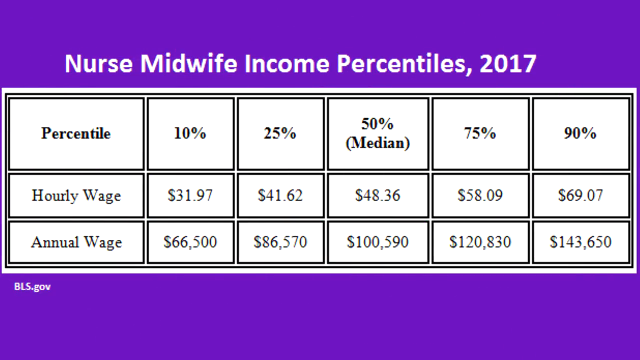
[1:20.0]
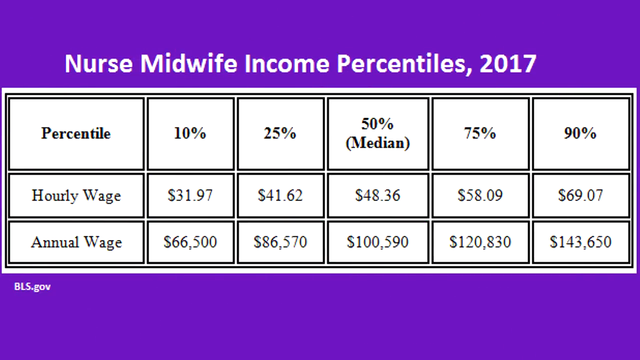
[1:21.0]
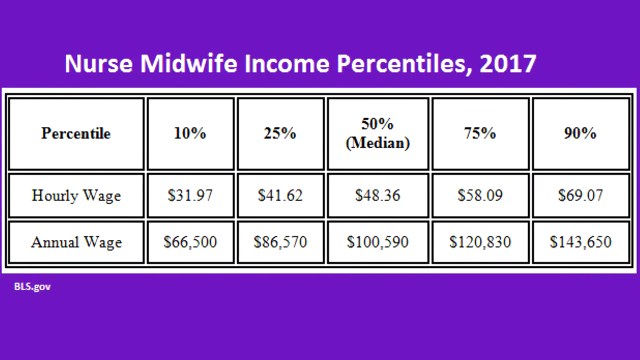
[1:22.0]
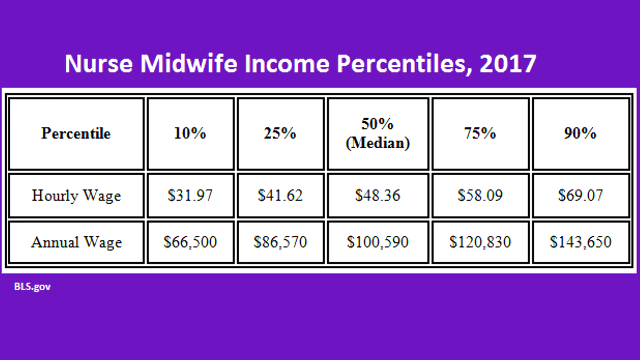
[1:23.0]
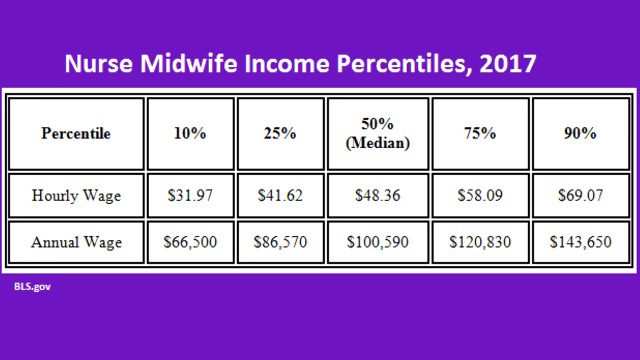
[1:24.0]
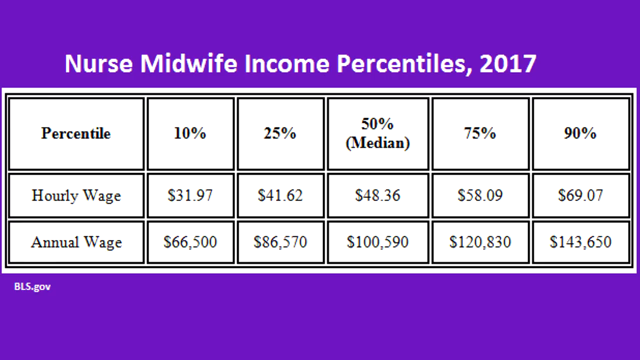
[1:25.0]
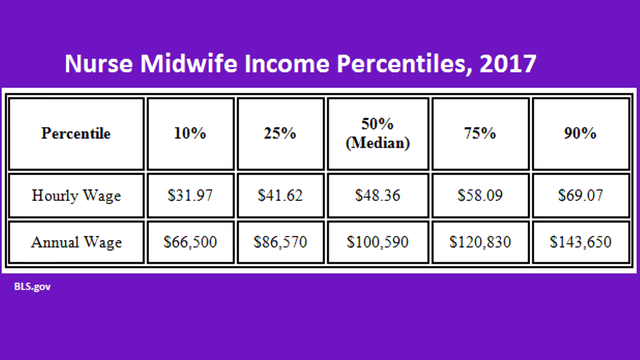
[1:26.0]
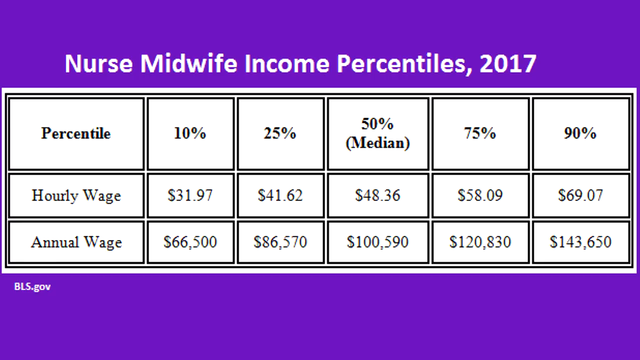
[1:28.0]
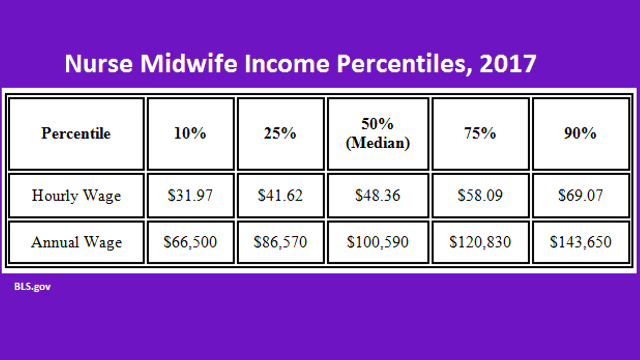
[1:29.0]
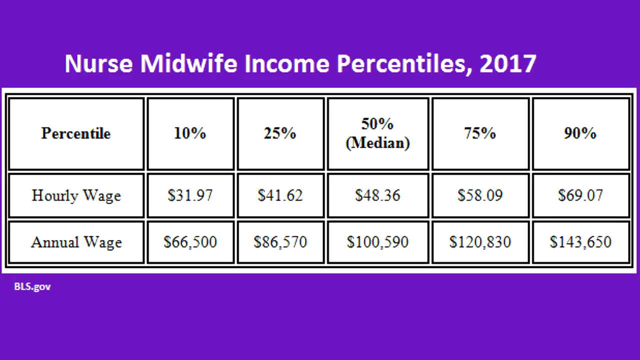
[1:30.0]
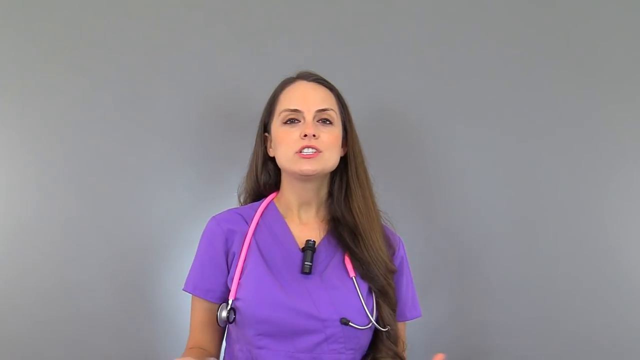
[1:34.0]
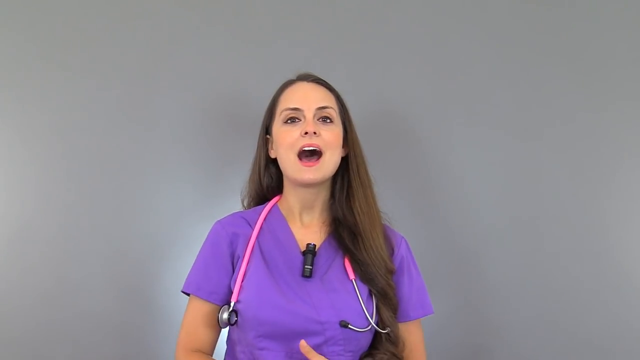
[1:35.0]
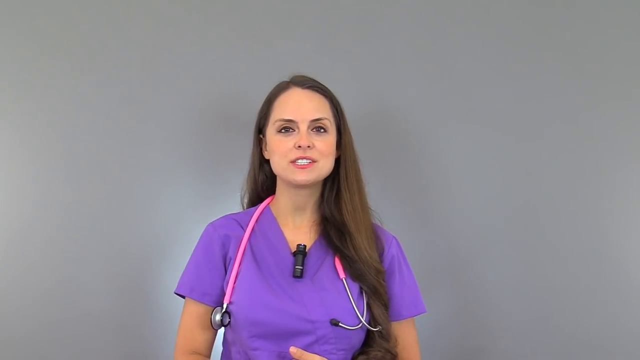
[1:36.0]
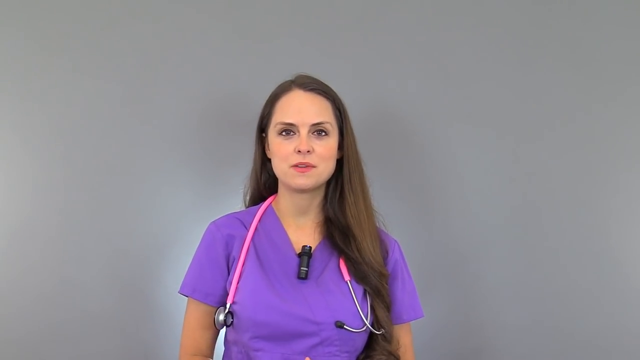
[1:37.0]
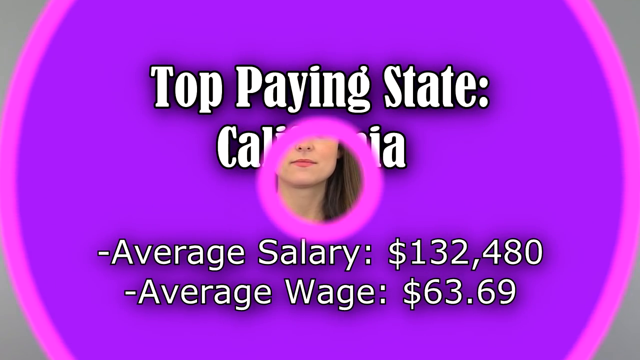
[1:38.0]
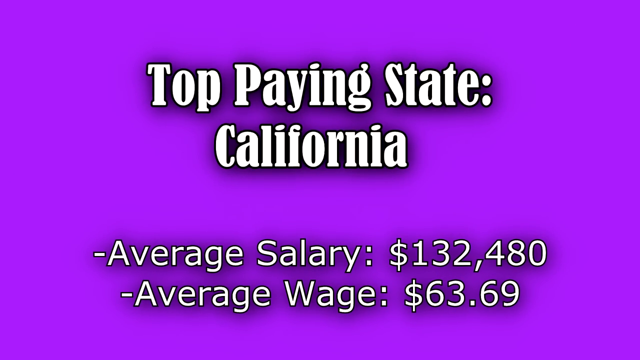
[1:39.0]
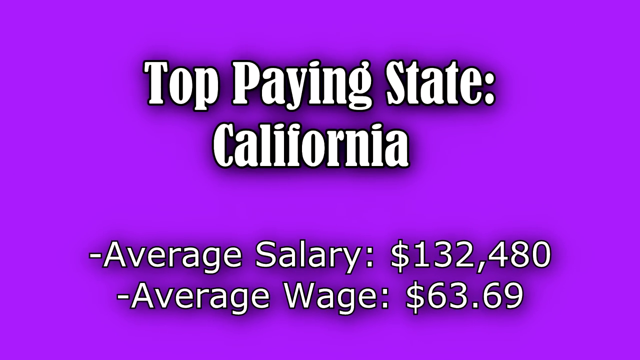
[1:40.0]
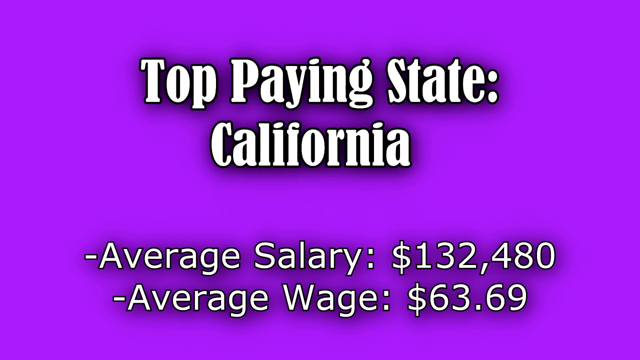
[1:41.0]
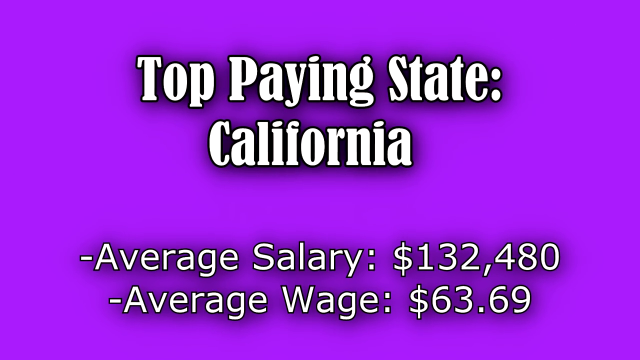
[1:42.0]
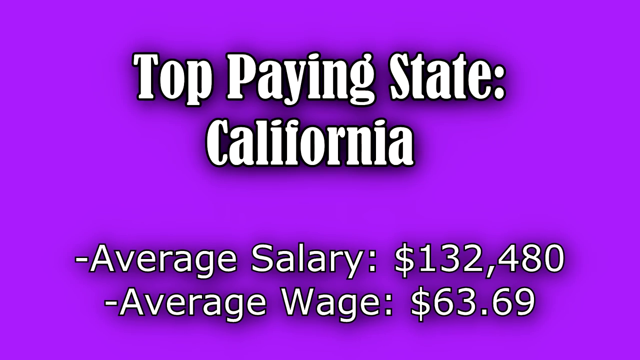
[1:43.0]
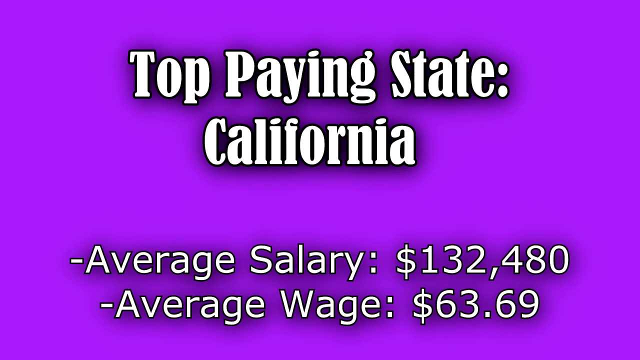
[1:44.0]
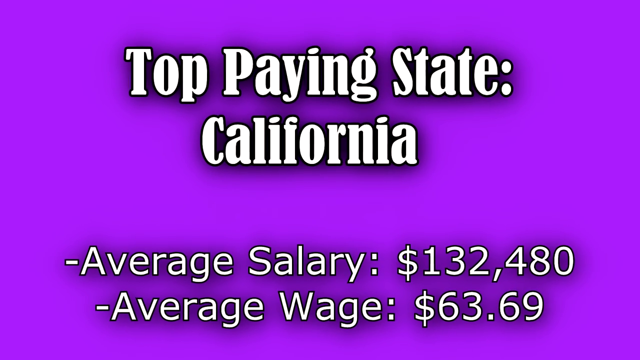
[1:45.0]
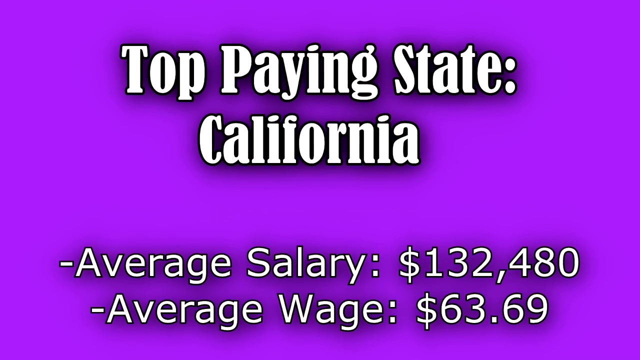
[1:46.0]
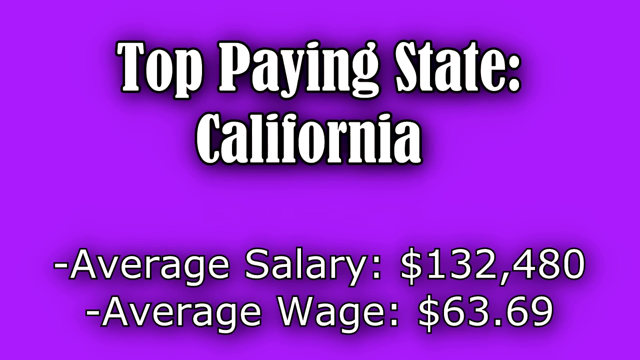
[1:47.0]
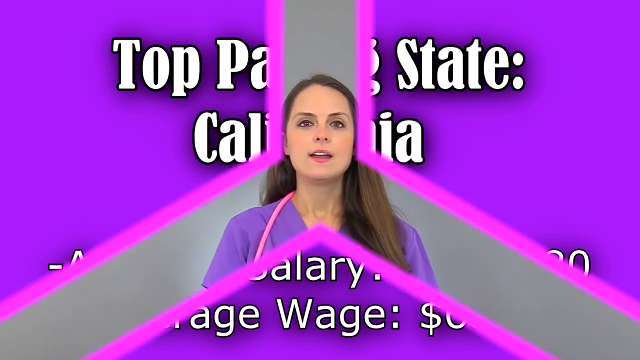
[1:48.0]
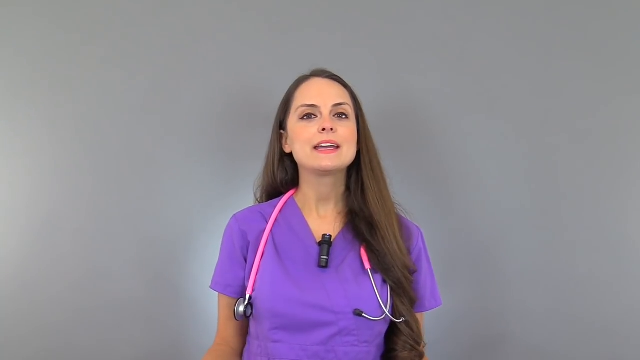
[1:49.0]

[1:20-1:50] The purple screen titled "Nurse Midwife Income Percentiles 2017" remains for approximately 13 seconds before changing to a full screen of the nurse in a purple scrub top with a pink stethoscope around her neck, in front of a solid gray background. She has long brown hair and a microphone clipped to the center of her scrub top's neckline. She keeps talking, occasionally shimmying her shoulders back and forth as she speaks. Next comes a purple page with a white title at the top, each word capitalized and outlined in black, reading "Top Paying State," with "California" beneath it. Two bullet points follow: "average salary $132,480" and, below it, "average wage $63.69." After about seven seconds, the screen changes back to the full-screen nurse speaking toward the camera.